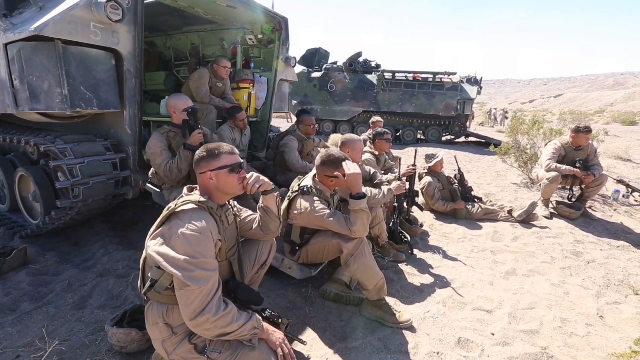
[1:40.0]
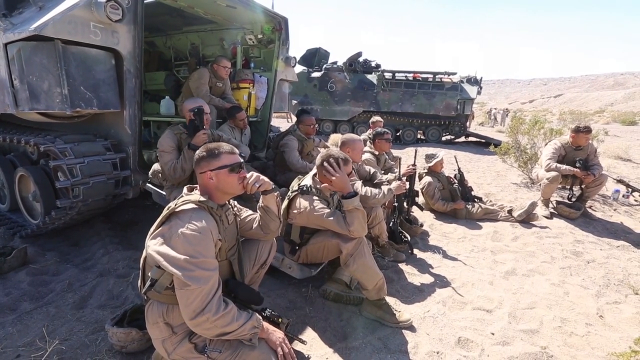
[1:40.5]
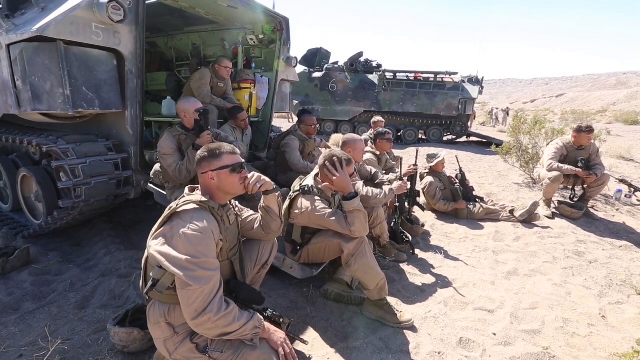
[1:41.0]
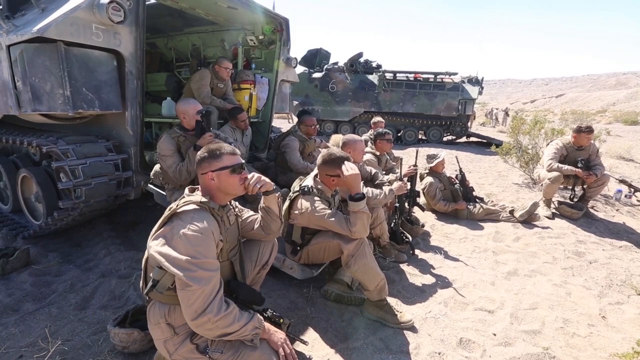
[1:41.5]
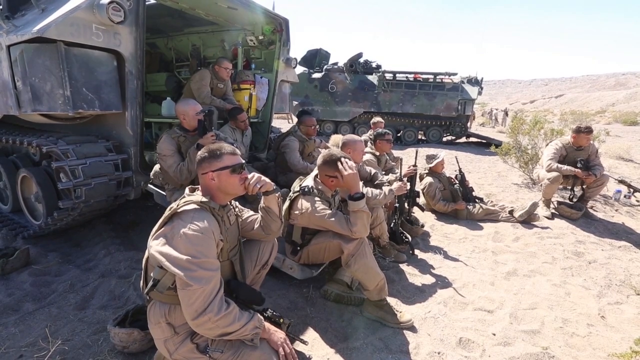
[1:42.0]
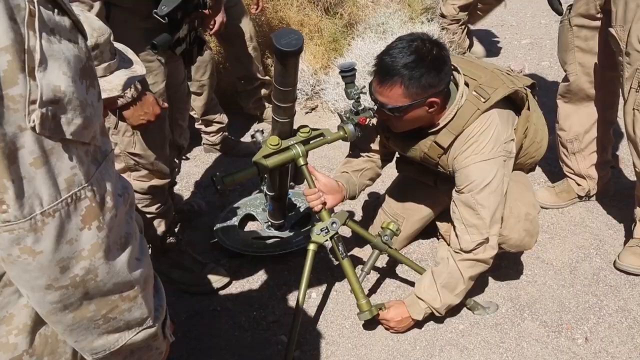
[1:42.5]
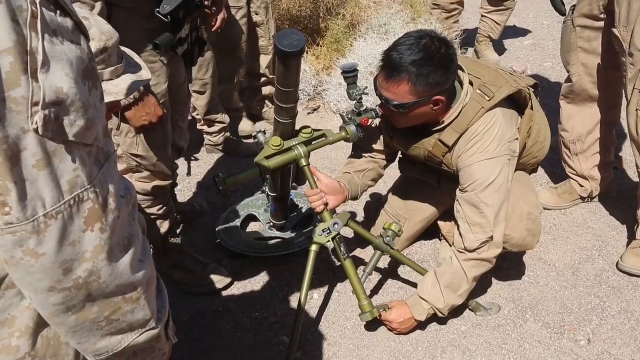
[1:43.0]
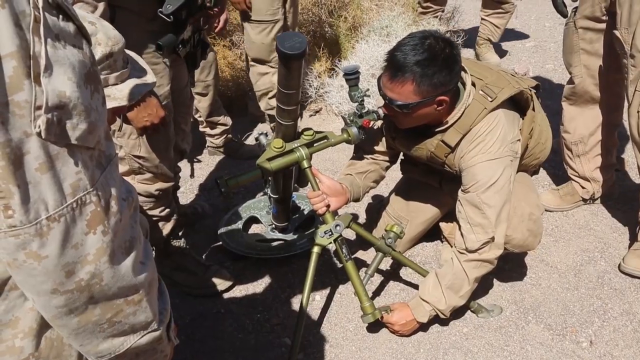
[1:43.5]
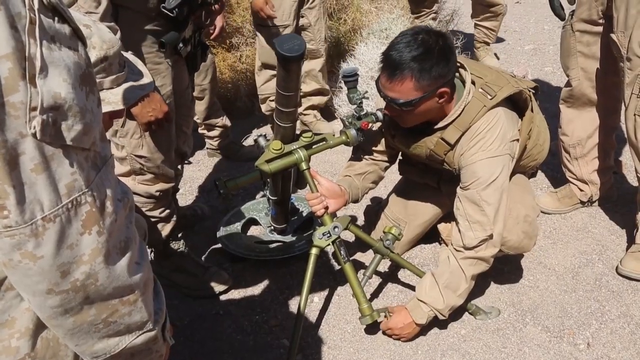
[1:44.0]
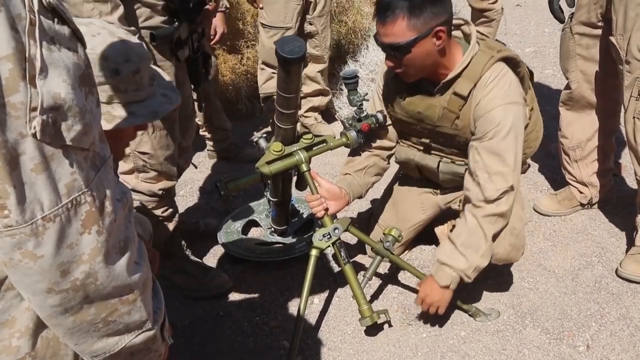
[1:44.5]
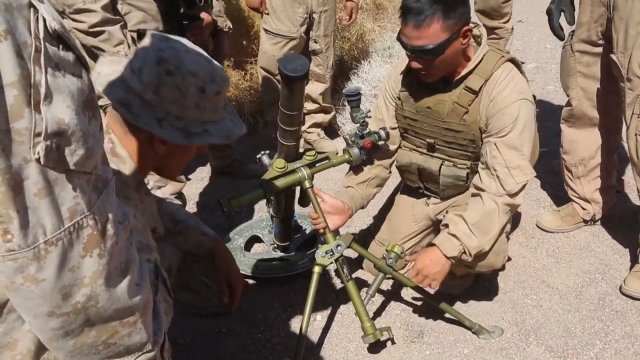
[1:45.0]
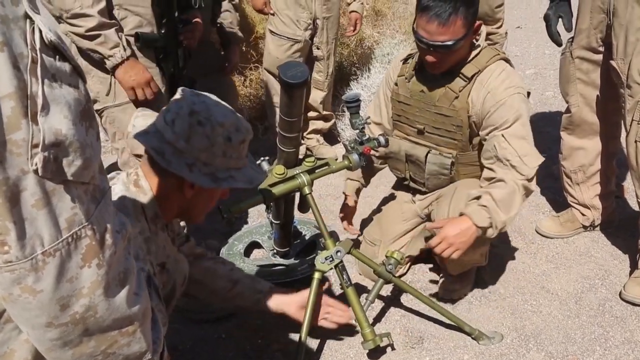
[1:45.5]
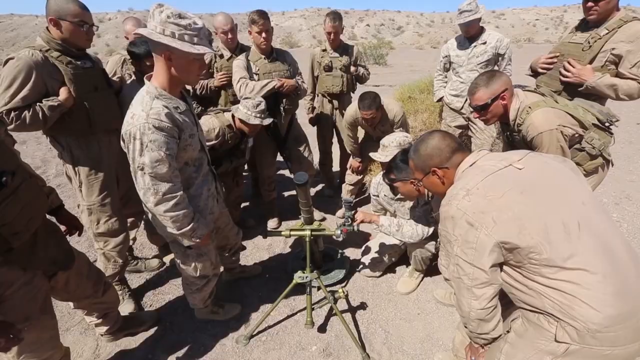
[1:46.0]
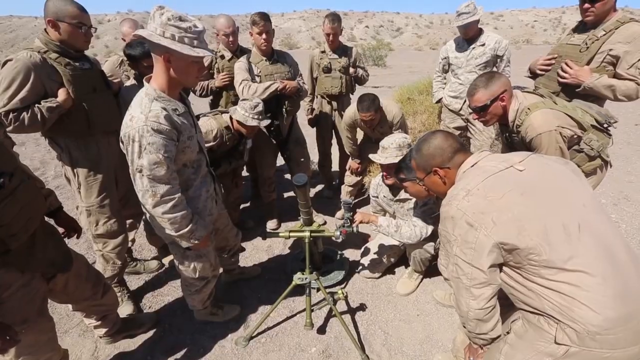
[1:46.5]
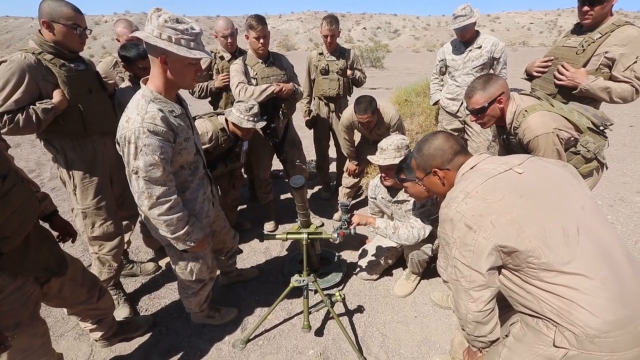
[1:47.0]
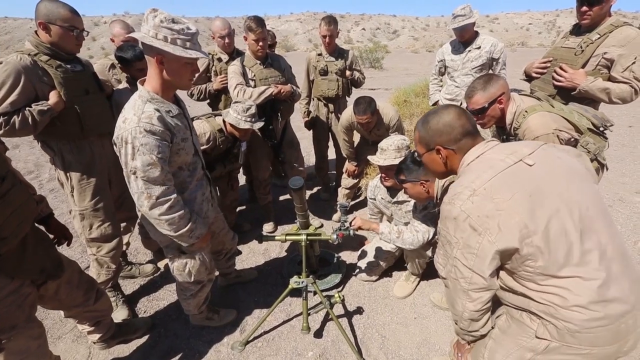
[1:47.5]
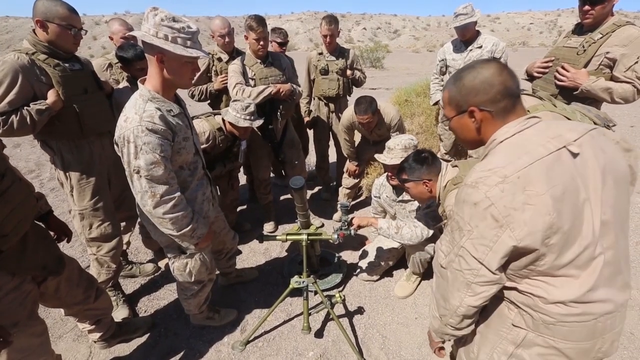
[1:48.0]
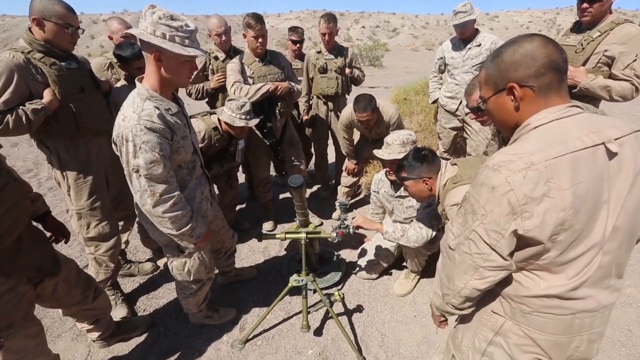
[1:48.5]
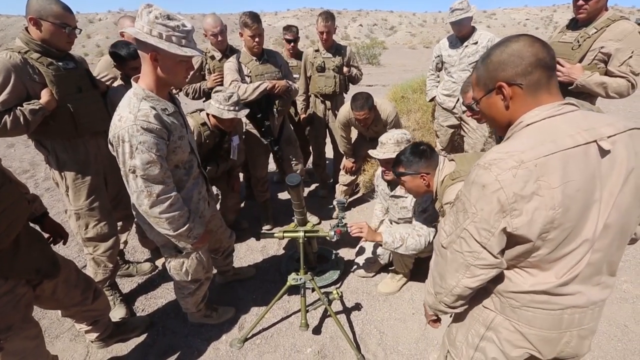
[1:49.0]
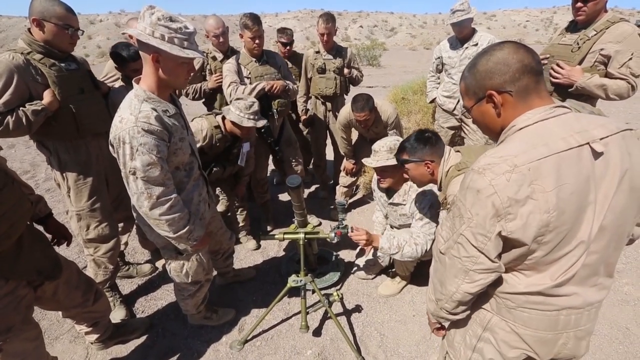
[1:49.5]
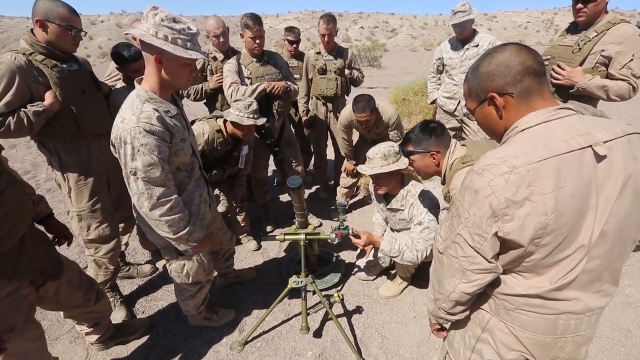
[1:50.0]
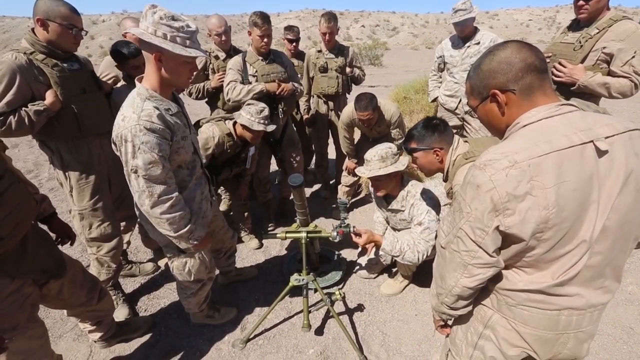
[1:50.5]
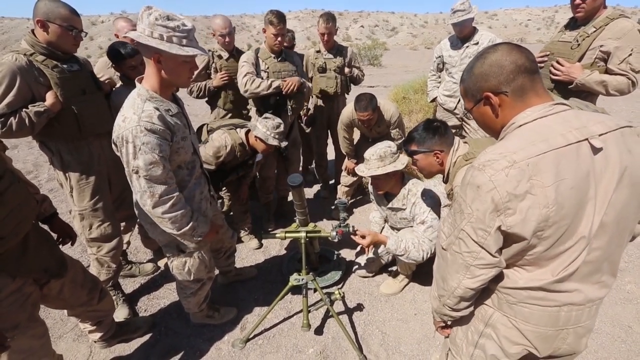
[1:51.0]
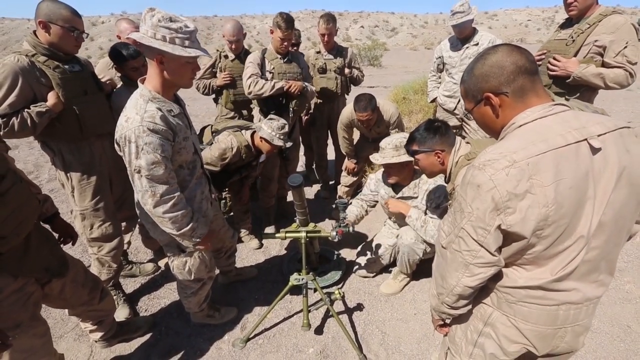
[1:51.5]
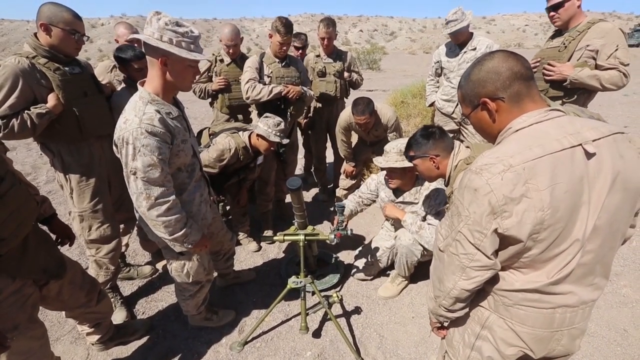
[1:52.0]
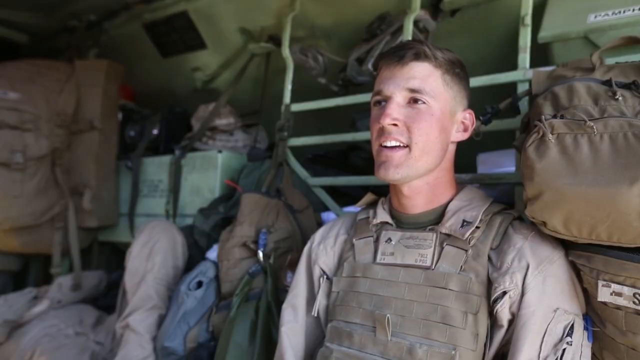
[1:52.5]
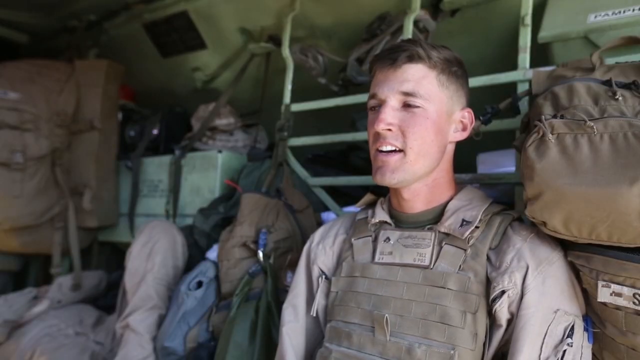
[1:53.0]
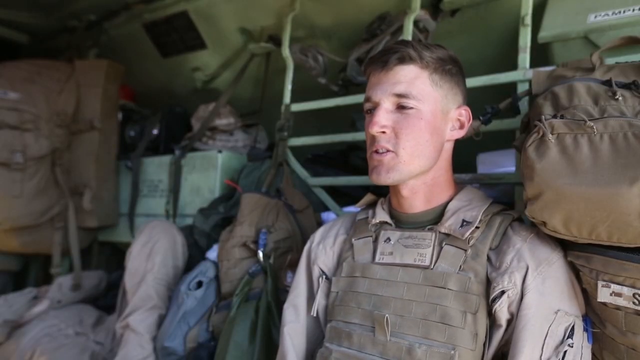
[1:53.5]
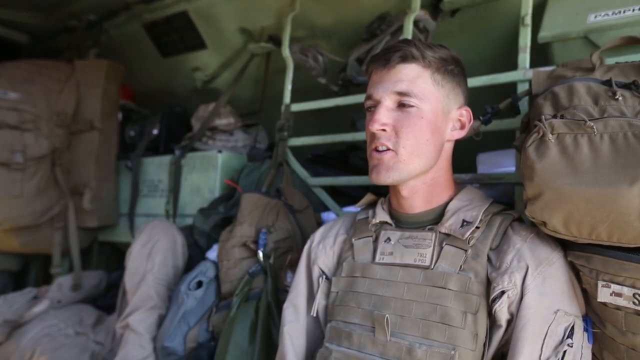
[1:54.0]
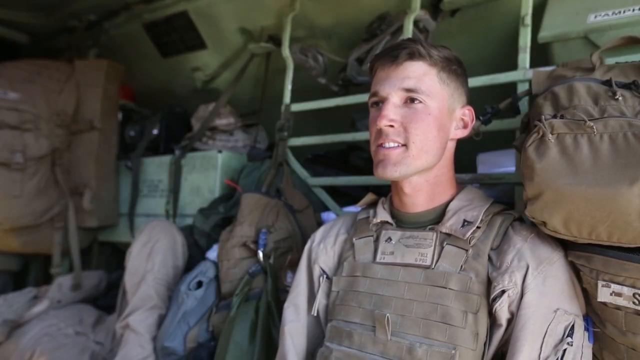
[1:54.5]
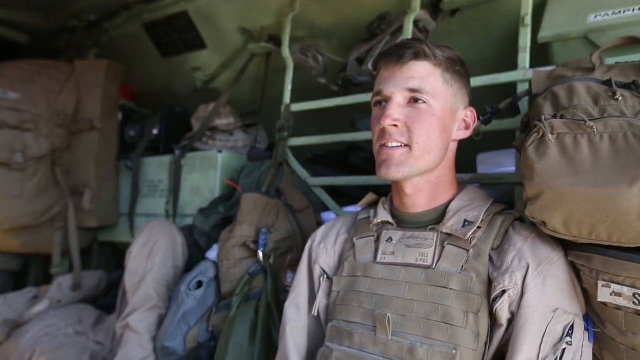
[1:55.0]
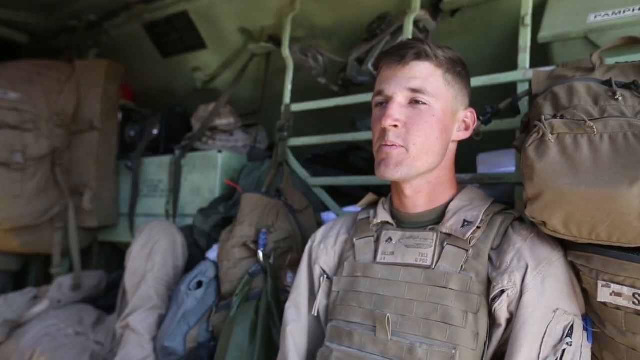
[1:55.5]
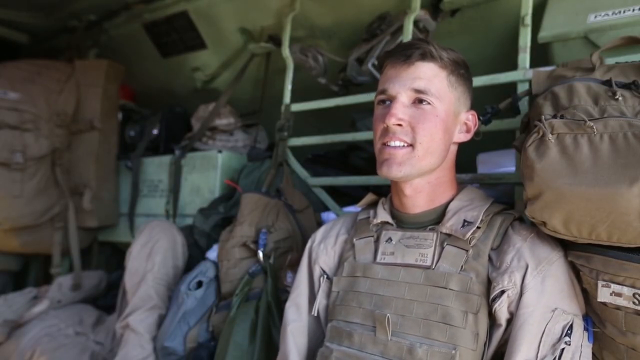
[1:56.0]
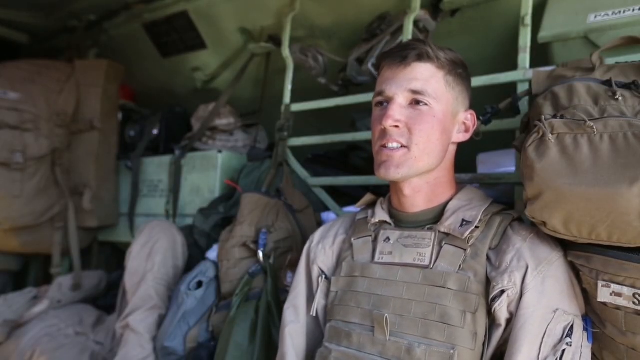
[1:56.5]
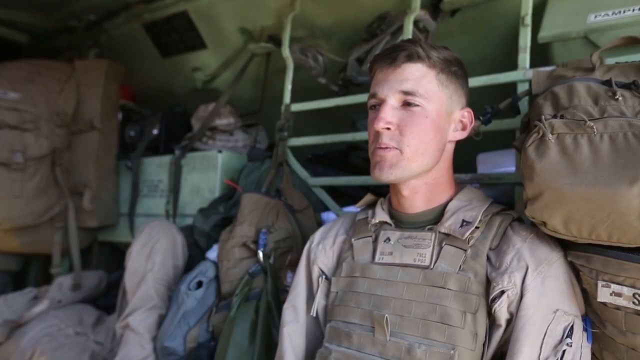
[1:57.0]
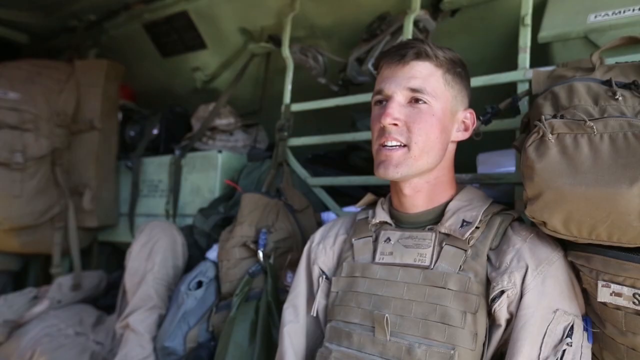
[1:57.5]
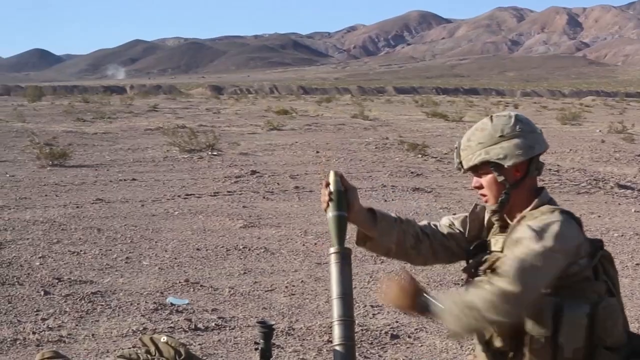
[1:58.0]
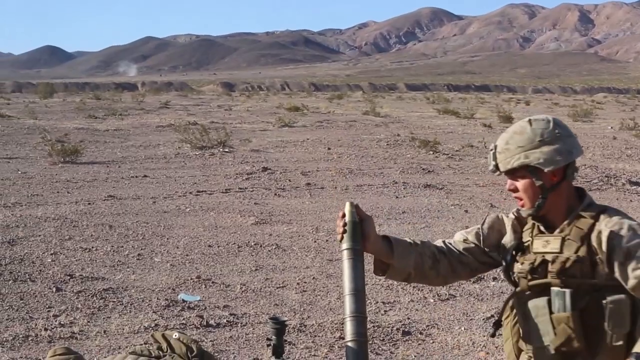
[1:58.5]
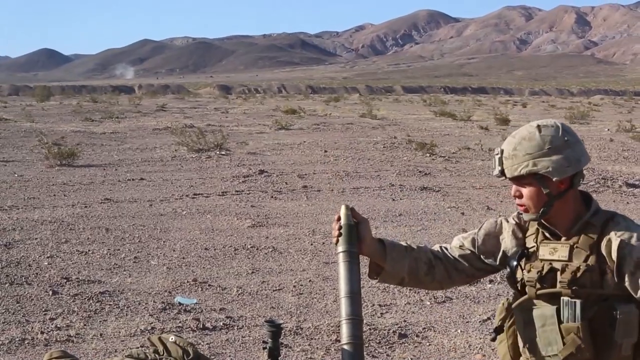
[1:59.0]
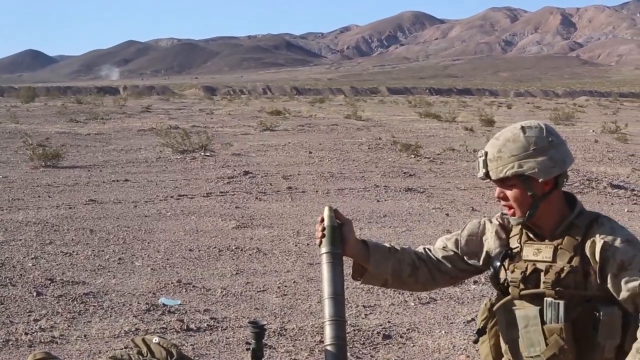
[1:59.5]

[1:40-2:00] A different angle on the soldiers' meeting faces the far left side where soldiers are sitting, and they continue to sit there. The soldier at the far left of the frame looks a bit bored, with his left hand sort of over his mouth; he might be biting his finger. A second soldier sort of brushes his head with his right hand, as if he is bored as well, and then sort of nods toward the right. The video cuts to what looks like a soldier kneeling down and setting up some kind of green scope on the ground. A shot from further away shows many soldiers standing around what looks like the scope that has been set up; they all seem to be looking down at it, some standing and some sort of hunching over to get a better look. The video cuts to more footage of the soldier being interviewed, and then to footage of what looks like someone putting something down the barrel of the scope.